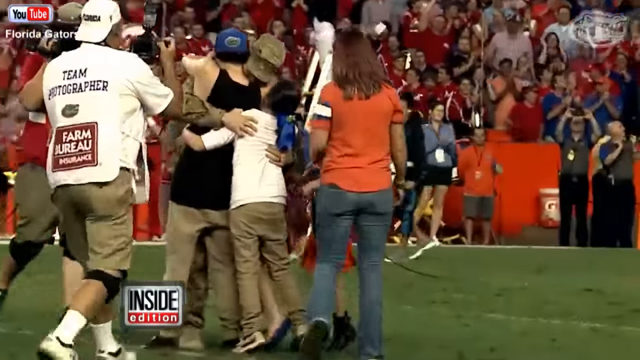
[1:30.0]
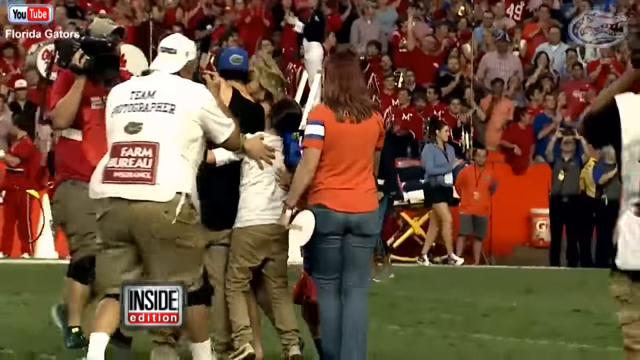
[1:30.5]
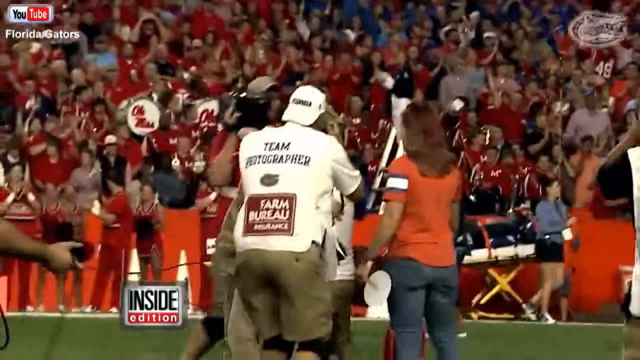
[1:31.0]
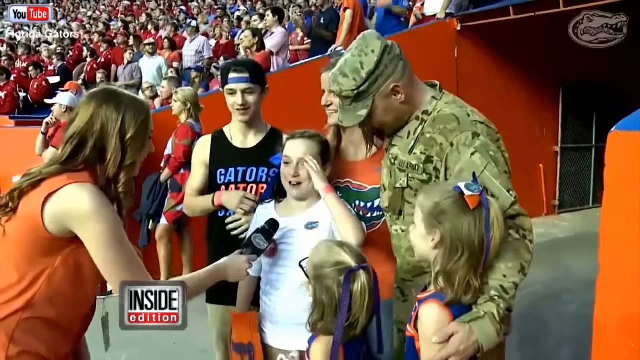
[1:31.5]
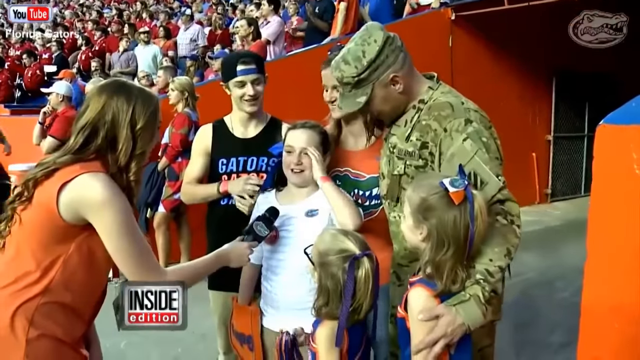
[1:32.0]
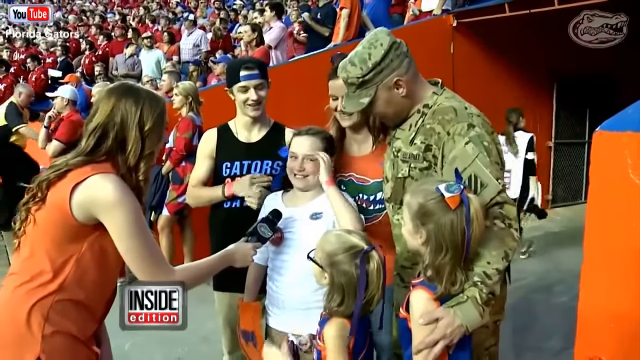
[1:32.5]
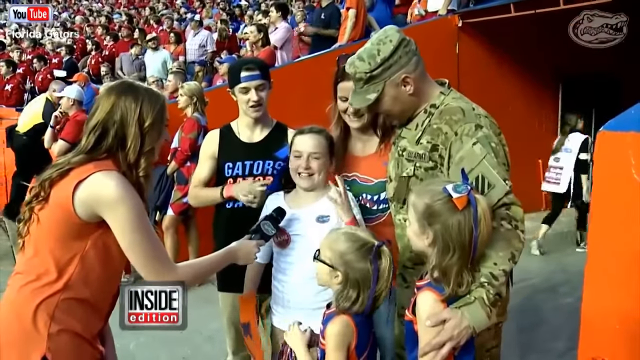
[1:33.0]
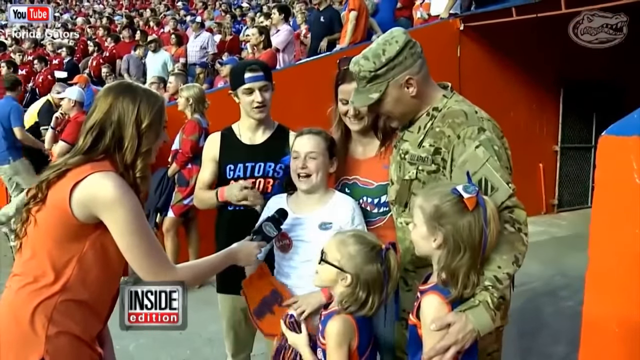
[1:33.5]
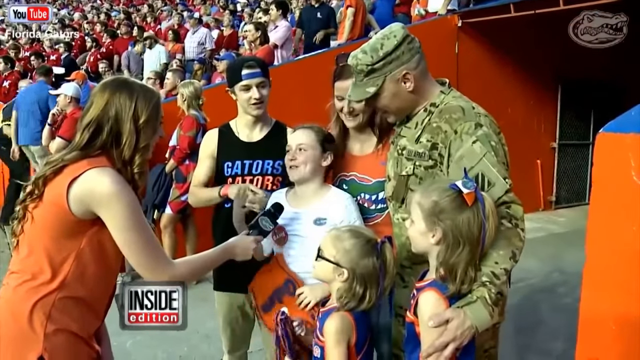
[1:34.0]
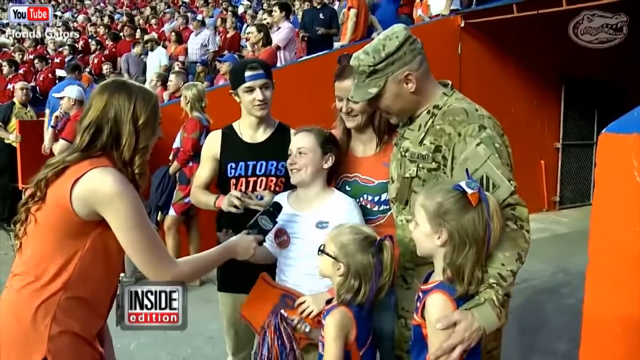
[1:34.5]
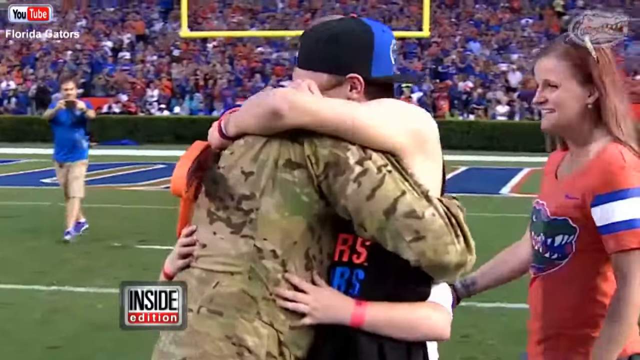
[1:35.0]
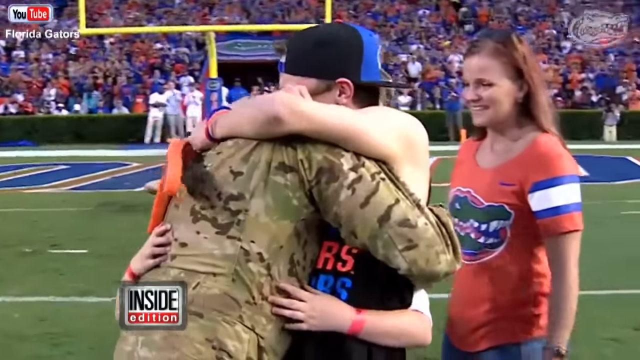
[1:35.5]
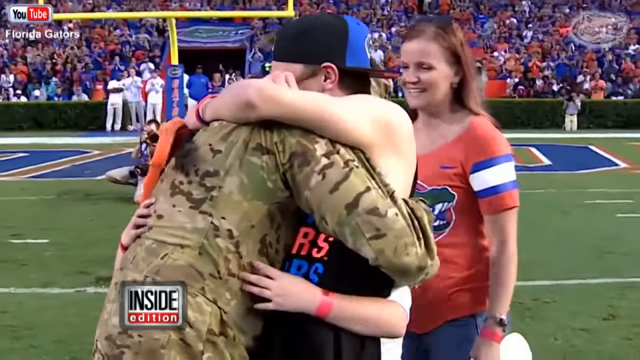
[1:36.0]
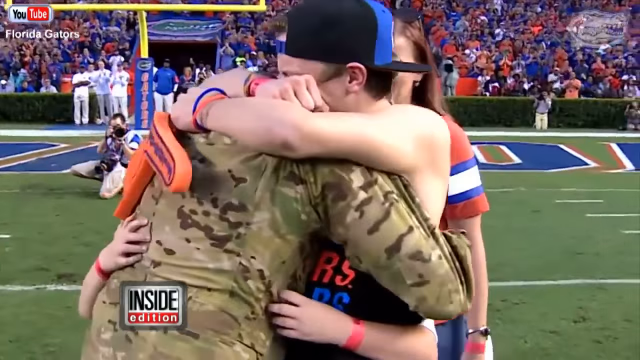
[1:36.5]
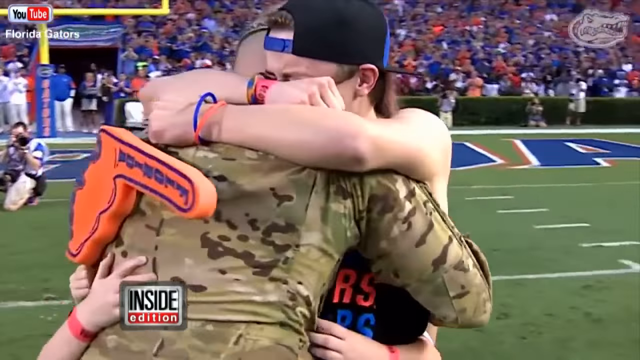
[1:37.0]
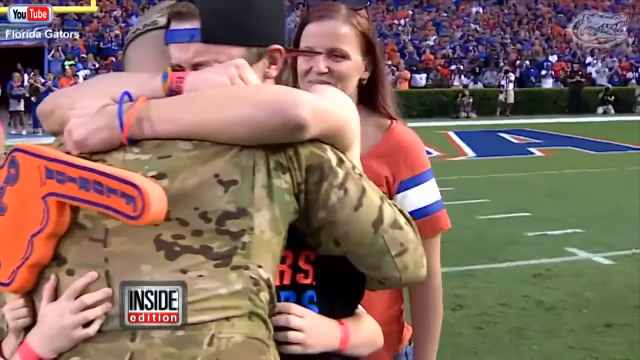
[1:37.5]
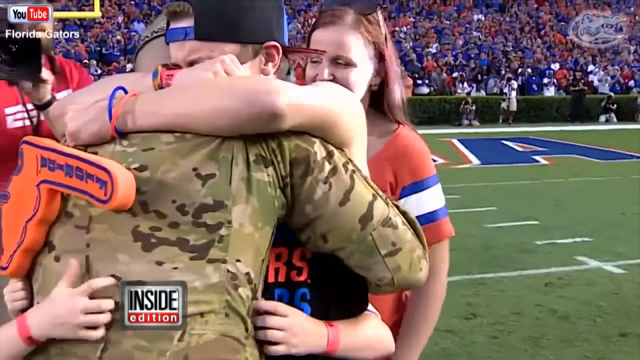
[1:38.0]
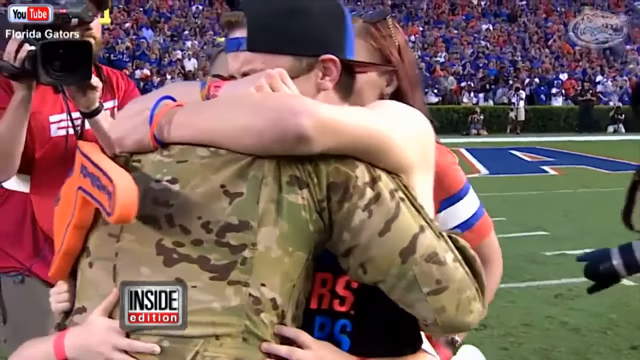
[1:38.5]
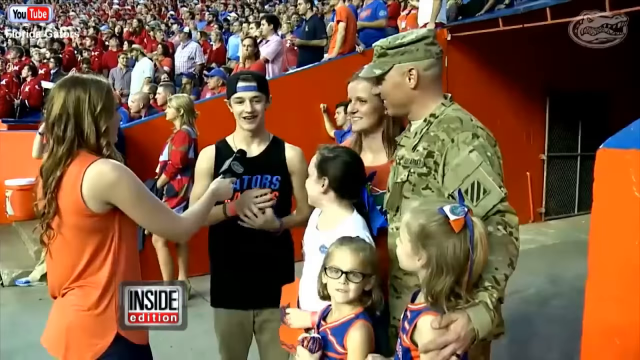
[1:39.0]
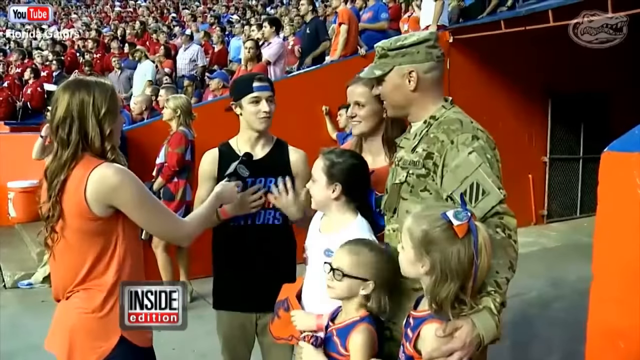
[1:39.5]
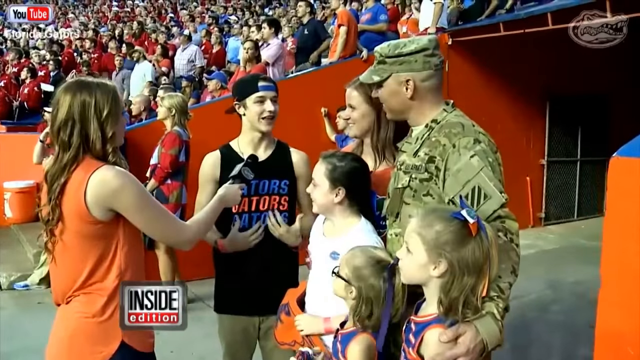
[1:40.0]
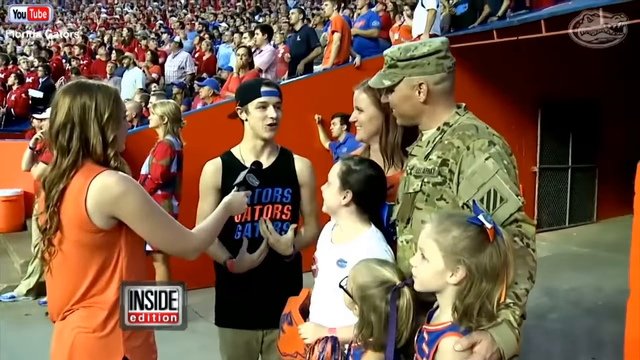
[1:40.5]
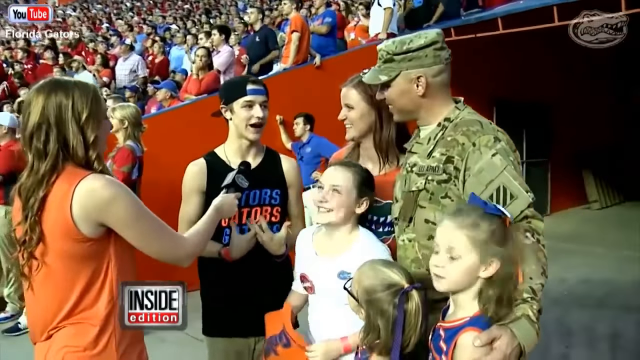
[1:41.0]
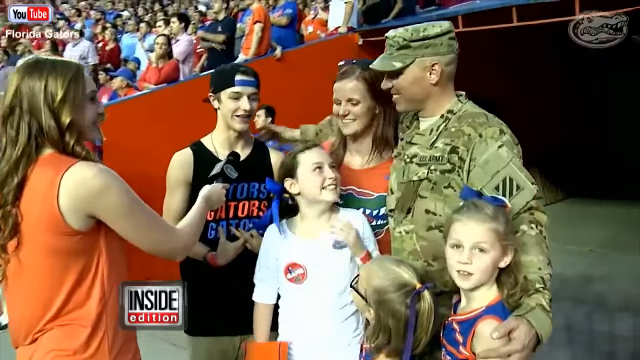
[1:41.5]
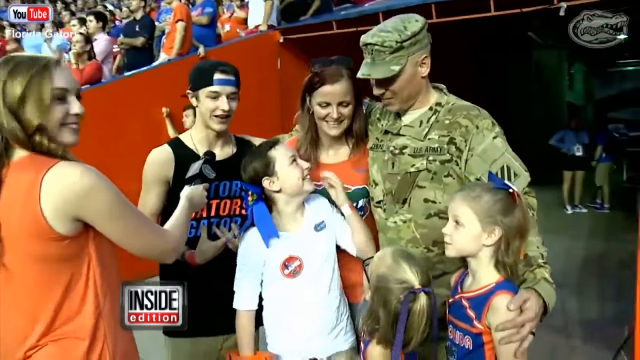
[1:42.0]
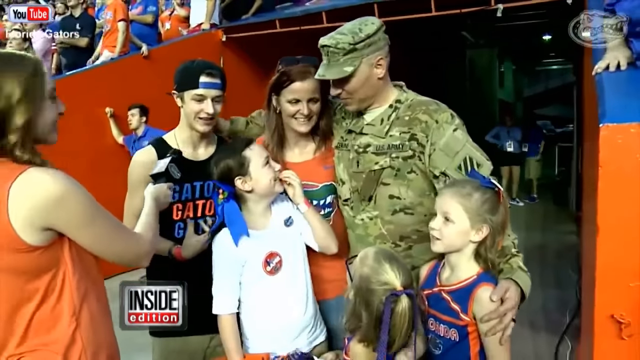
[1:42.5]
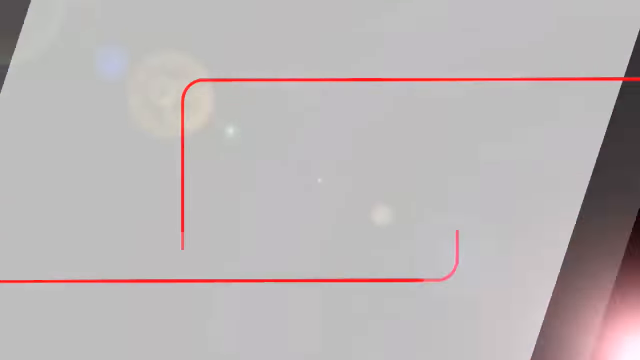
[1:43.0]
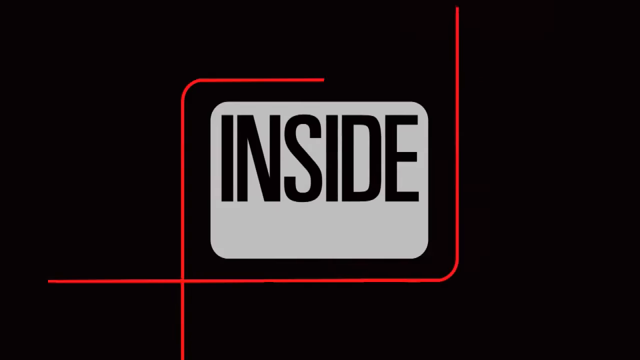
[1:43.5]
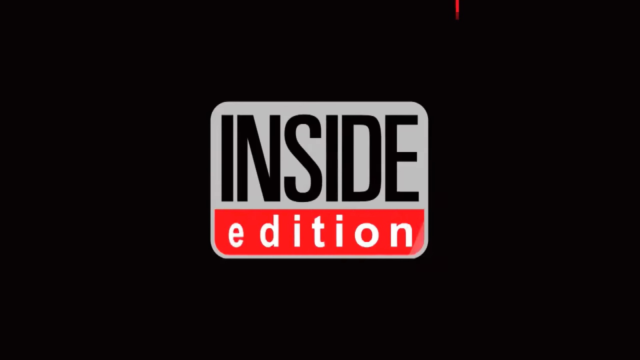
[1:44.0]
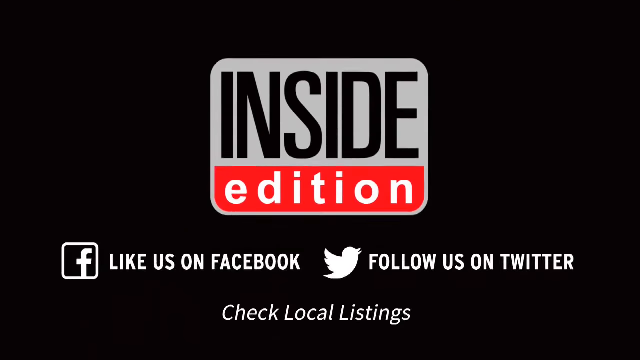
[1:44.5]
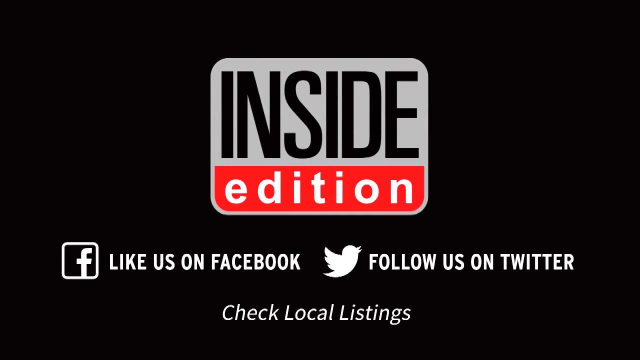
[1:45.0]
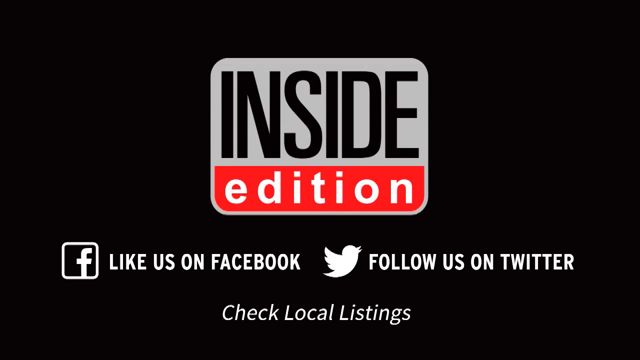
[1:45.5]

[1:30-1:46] The family is shown coming together and hugging, and then they are interviewed again: the older daughter talks to the reporter first, presumably about what just happened, and then the son is interviewed as well. A shot shows the whole family hugging. The video ends with the Inside Edition outro: "like us on Facebook", "follow us on Twitter", "check local listings".